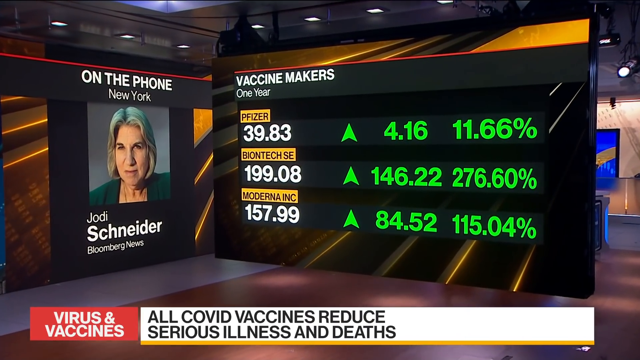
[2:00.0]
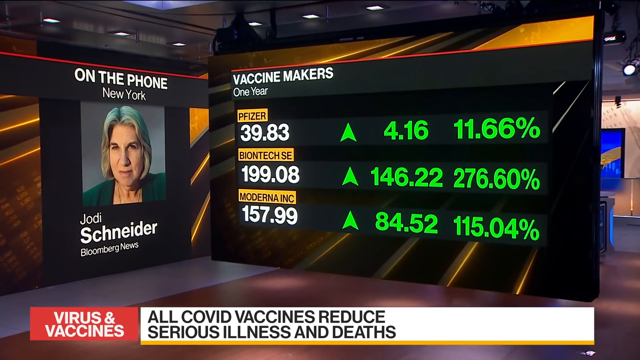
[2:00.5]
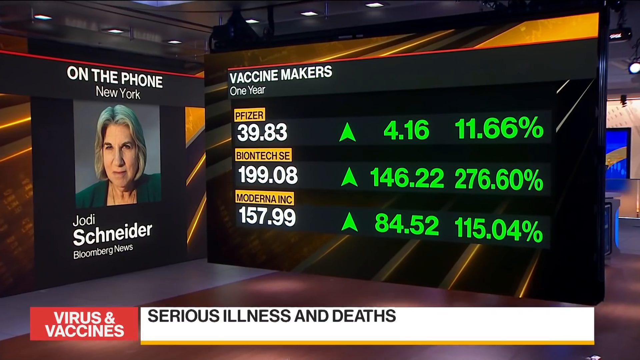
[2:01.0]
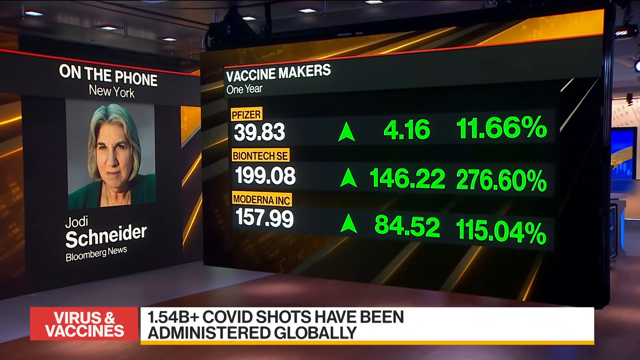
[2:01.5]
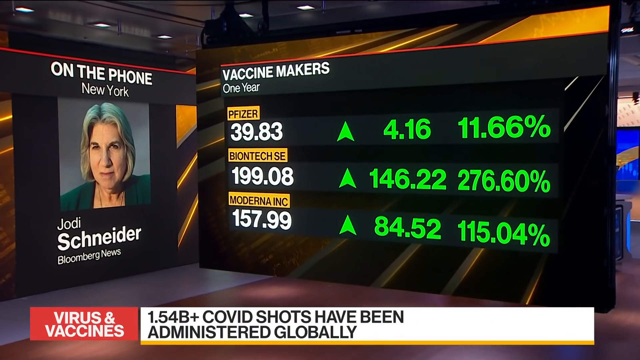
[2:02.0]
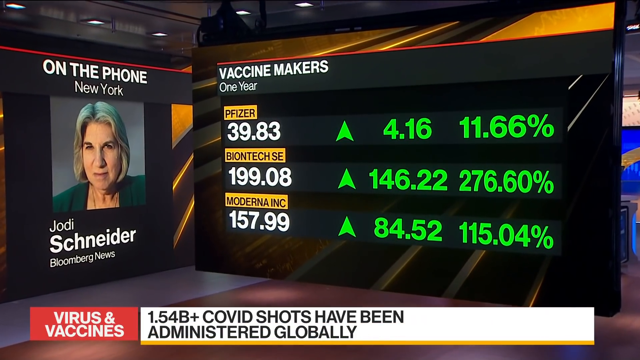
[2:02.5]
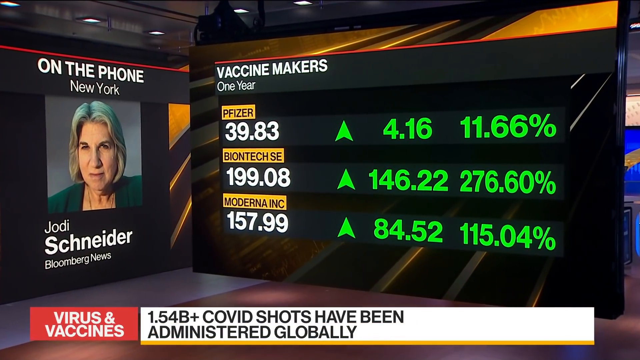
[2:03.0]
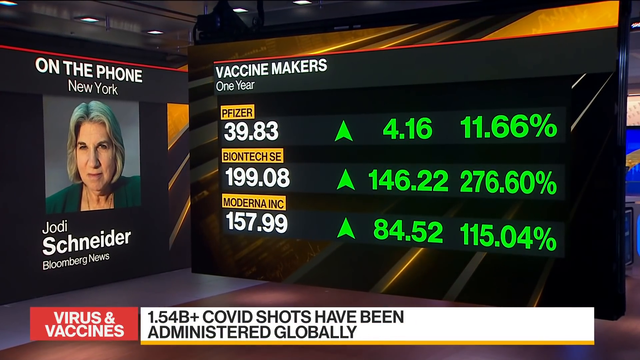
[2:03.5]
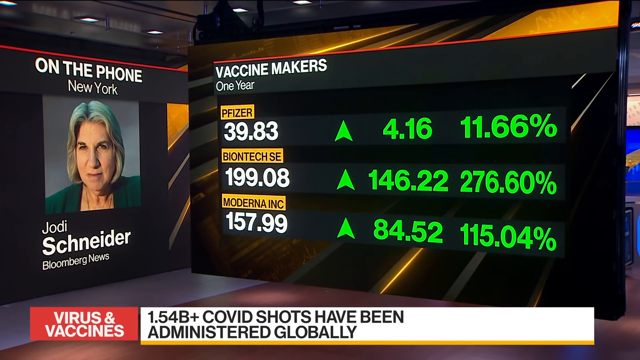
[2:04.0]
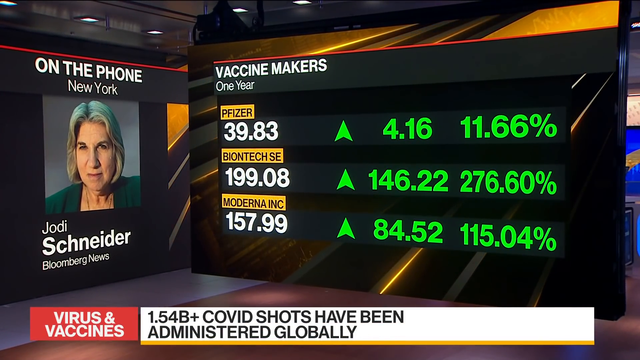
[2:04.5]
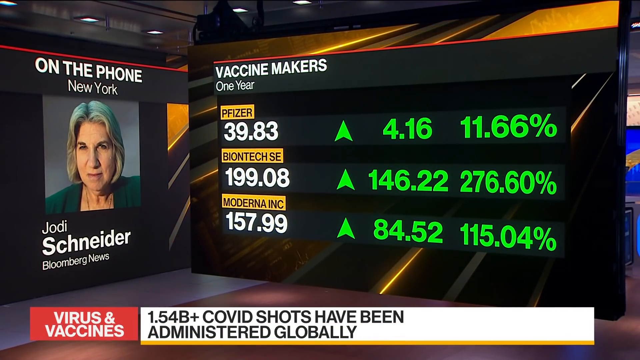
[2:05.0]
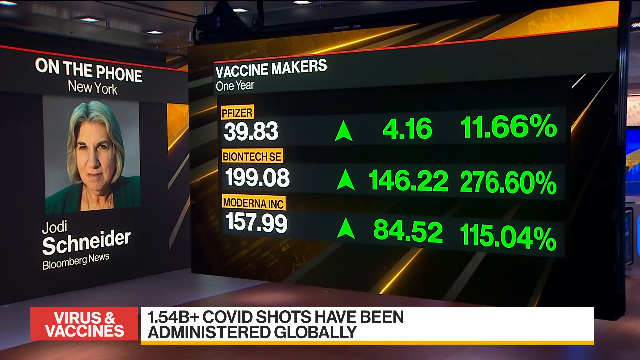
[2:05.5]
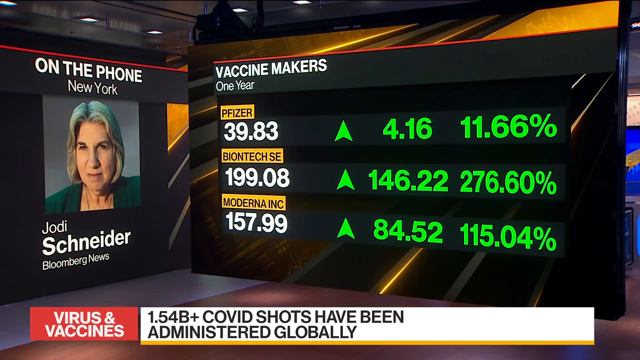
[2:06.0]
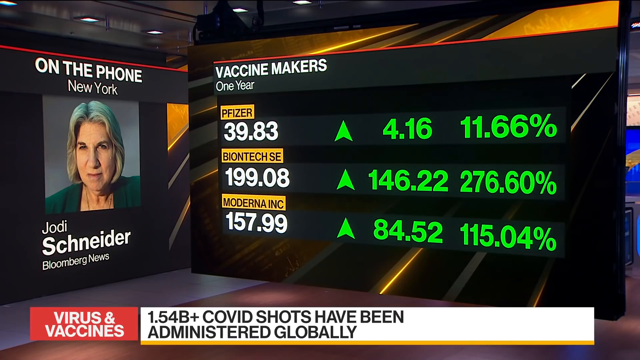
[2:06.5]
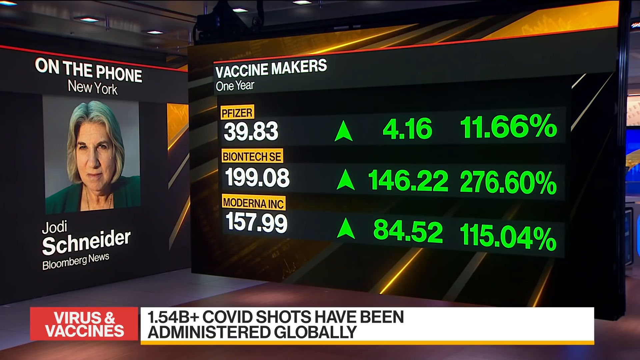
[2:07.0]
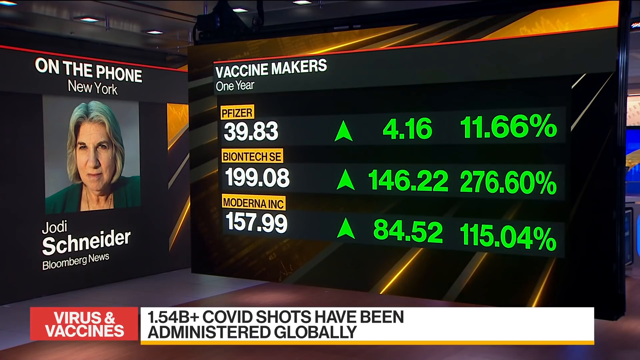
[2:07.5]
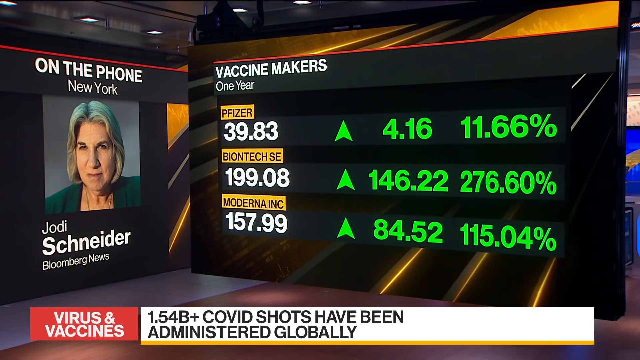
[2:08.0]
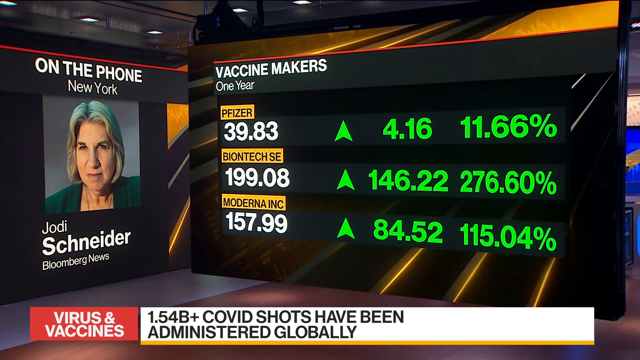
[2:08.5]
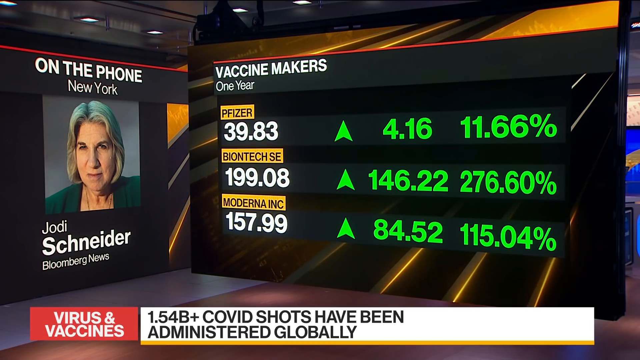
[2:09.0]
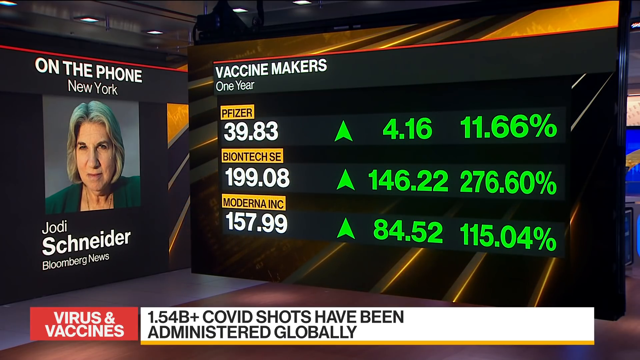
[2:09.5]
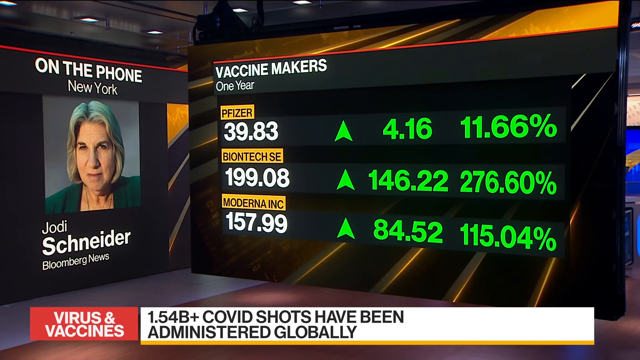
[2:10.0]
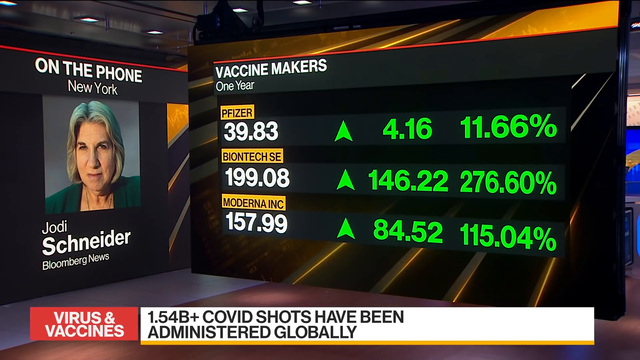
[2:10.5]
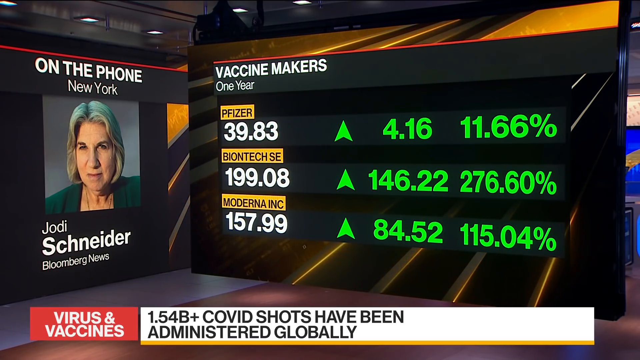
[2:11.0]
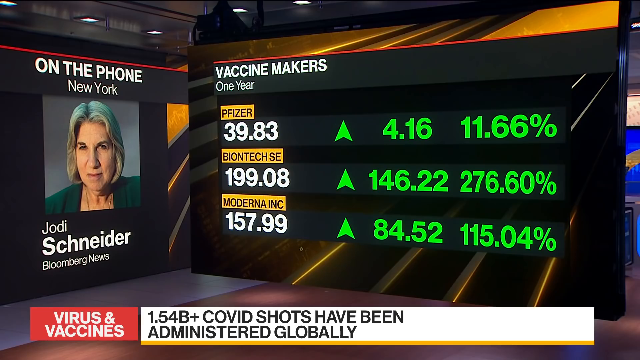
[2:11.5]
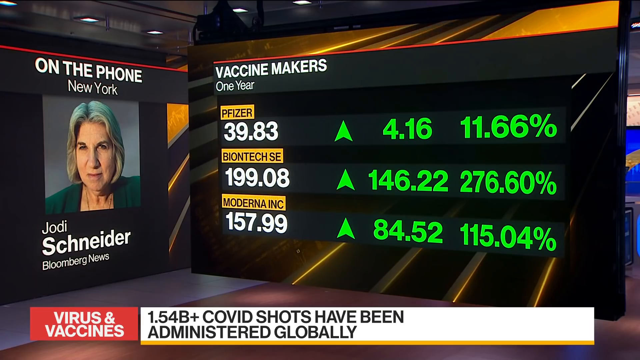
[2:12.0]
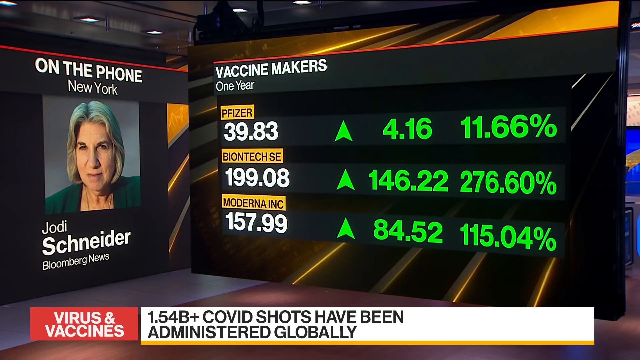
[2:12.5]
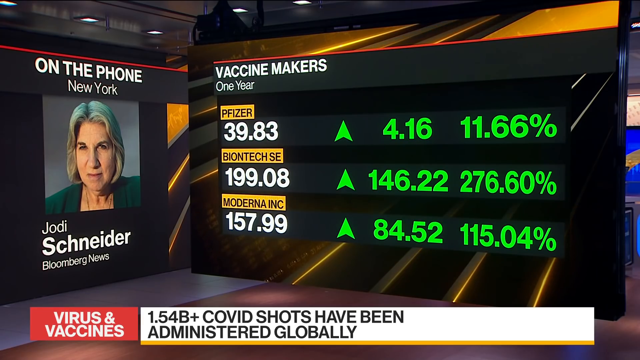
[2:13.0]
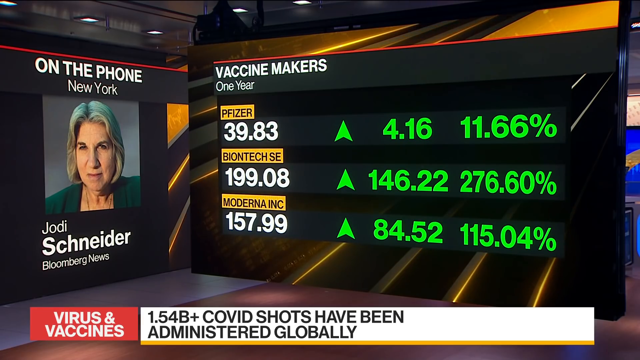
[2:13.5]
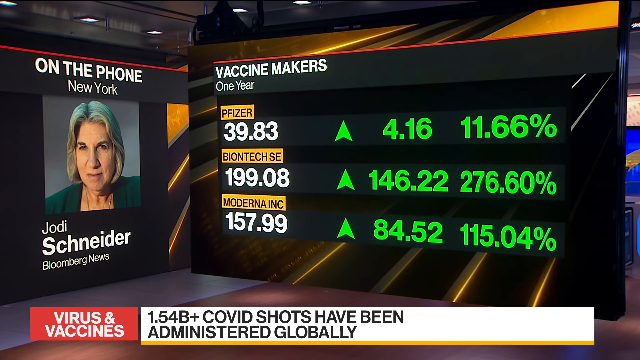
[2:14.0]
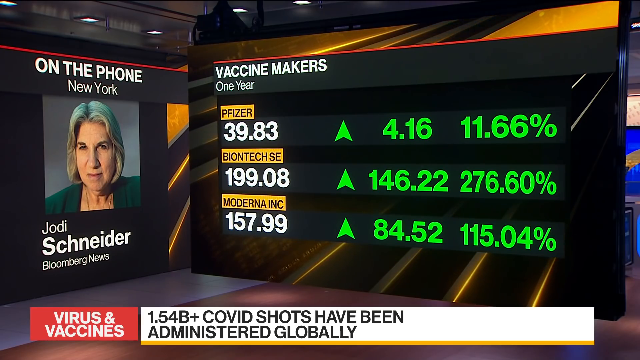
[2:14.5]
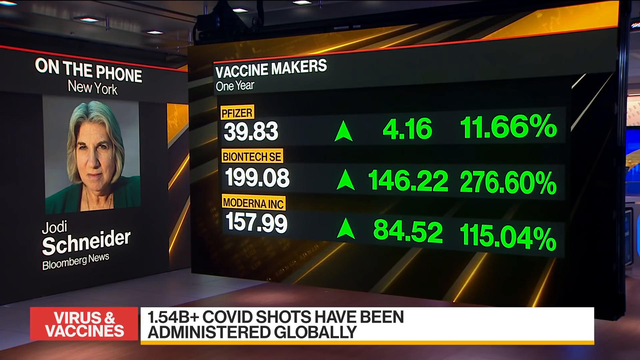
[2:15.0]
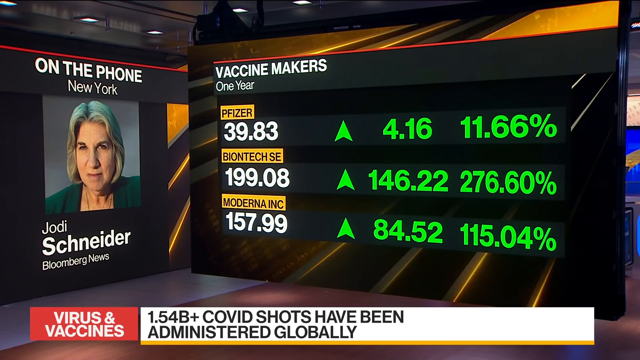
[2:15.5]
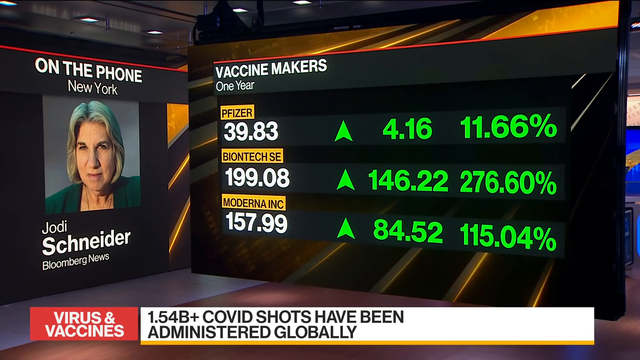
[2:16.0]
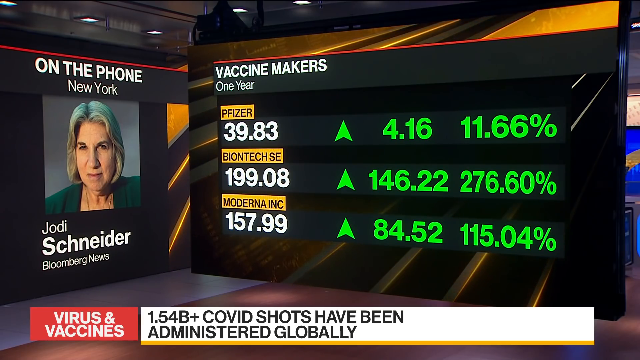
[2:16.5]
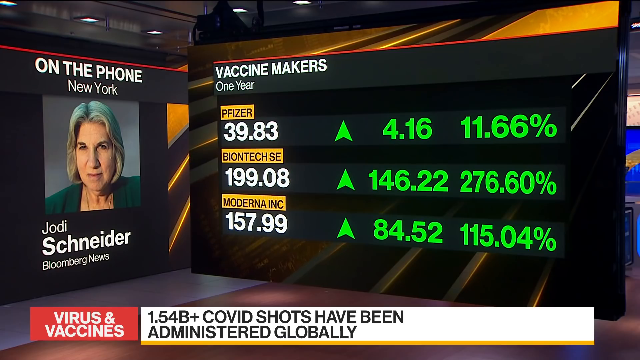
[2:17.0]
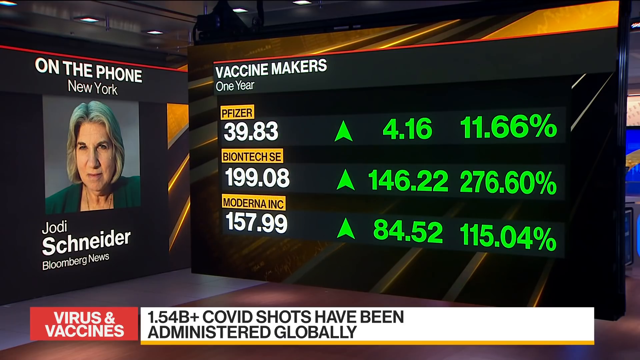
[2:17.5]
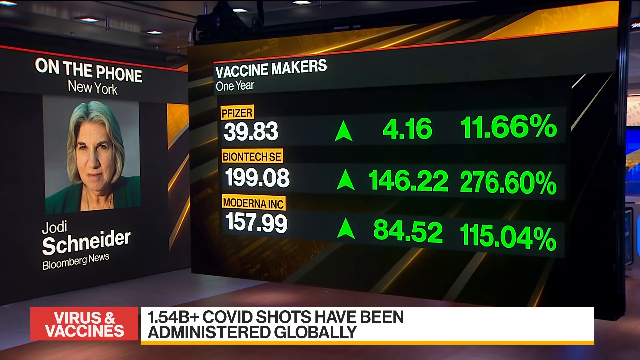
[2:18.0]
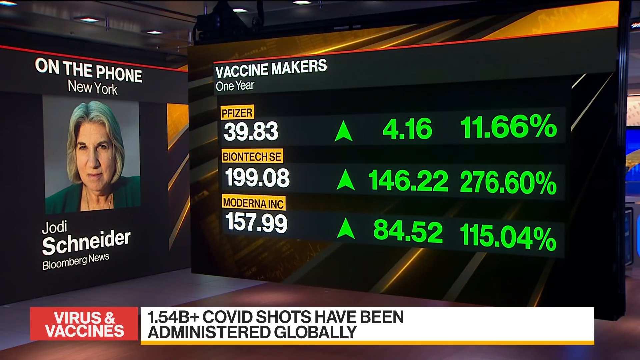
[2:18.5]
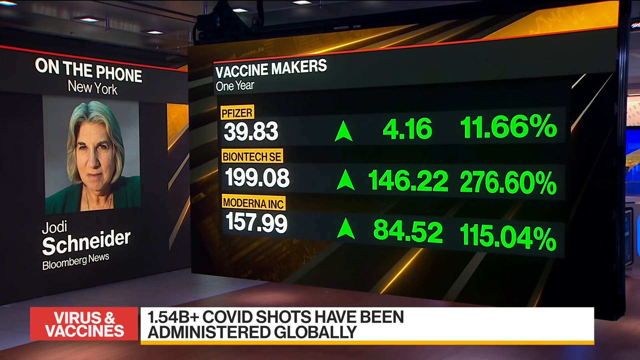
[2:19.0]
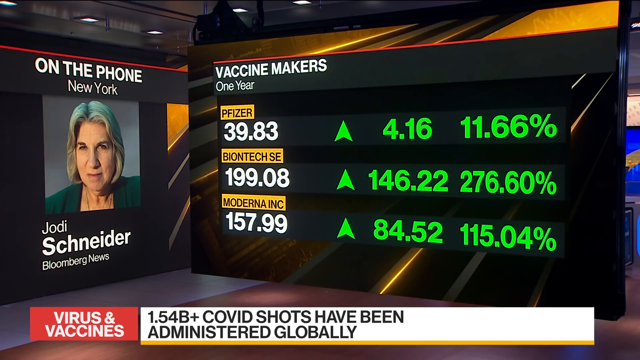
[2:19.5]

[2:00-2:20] On-screen text reads "1.54 billion COVID shots have been administered globally," appearing at the bottom, next to the virus and vaccines tab. The numbers stay up, with Pfizer, BioNTech SE and Moderna Inc. still listed, and Jody is still on. The setting looks like a big newsroom with many monitors, lights and colors.